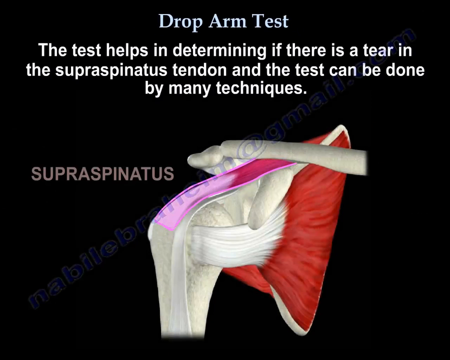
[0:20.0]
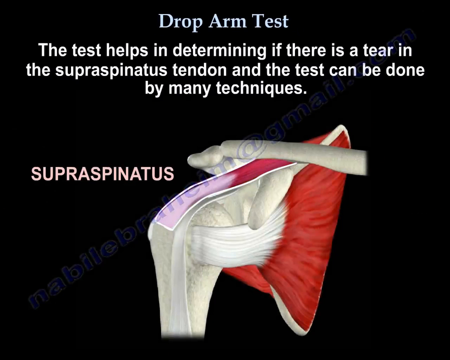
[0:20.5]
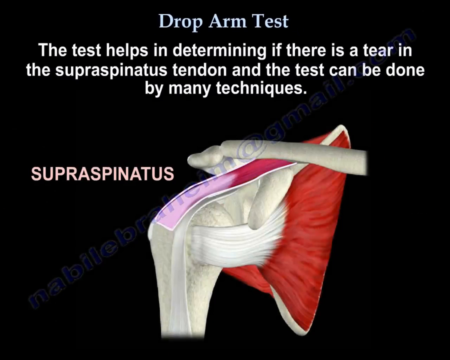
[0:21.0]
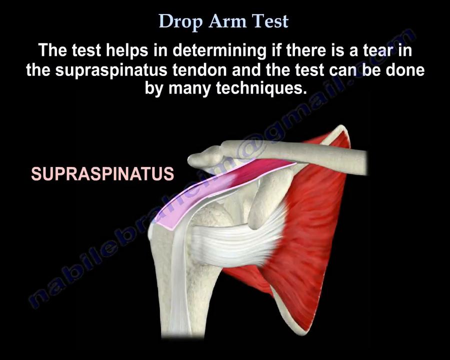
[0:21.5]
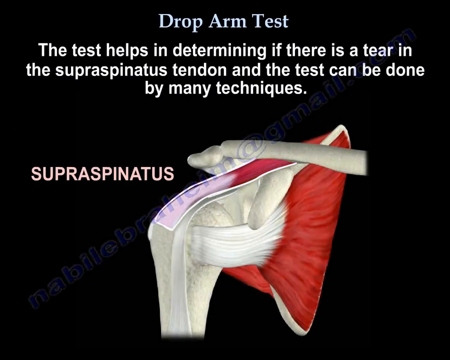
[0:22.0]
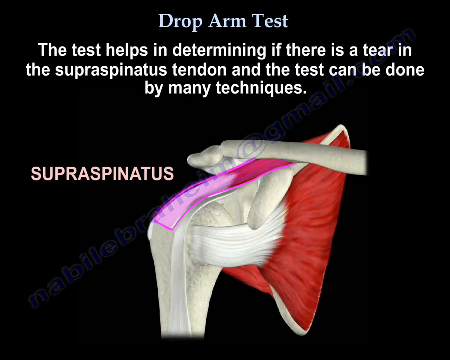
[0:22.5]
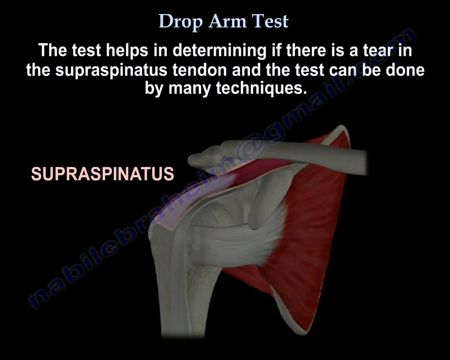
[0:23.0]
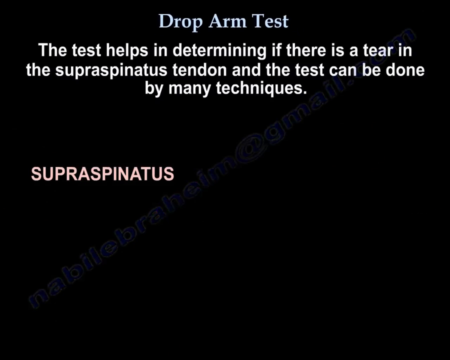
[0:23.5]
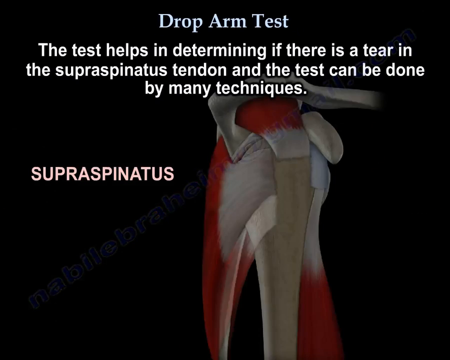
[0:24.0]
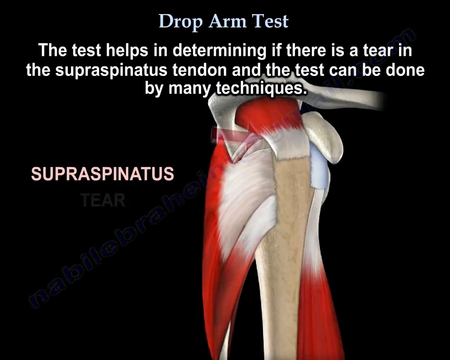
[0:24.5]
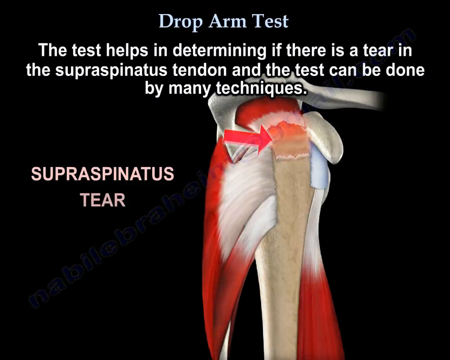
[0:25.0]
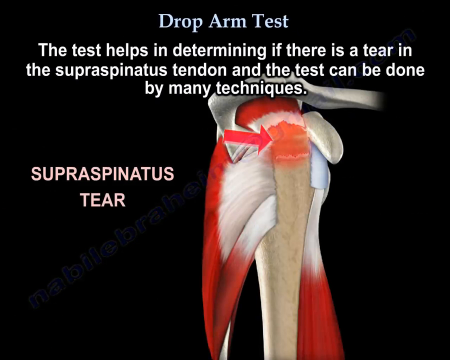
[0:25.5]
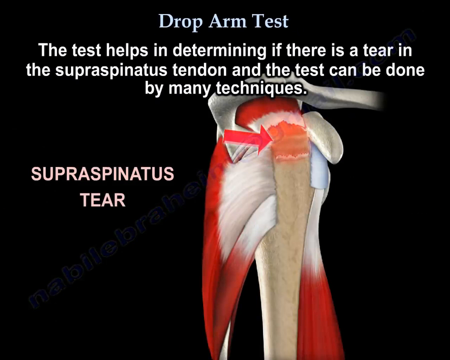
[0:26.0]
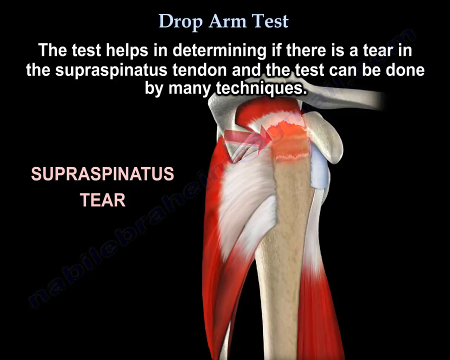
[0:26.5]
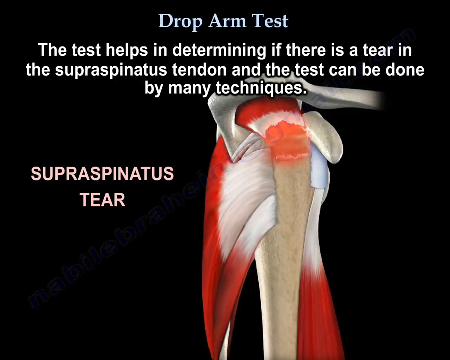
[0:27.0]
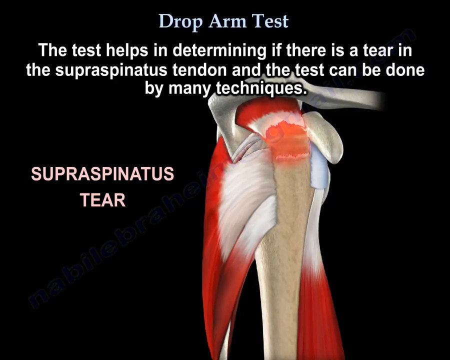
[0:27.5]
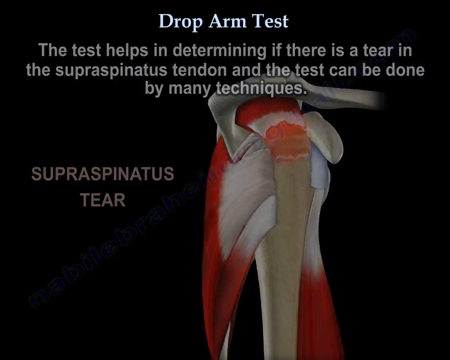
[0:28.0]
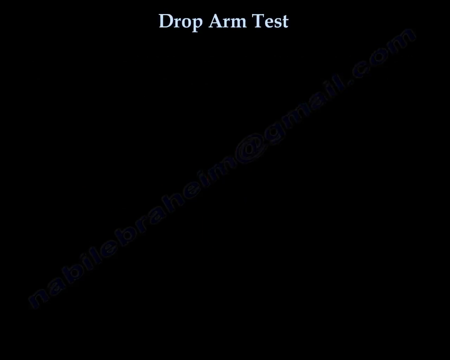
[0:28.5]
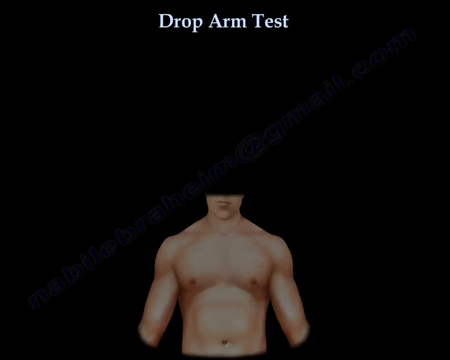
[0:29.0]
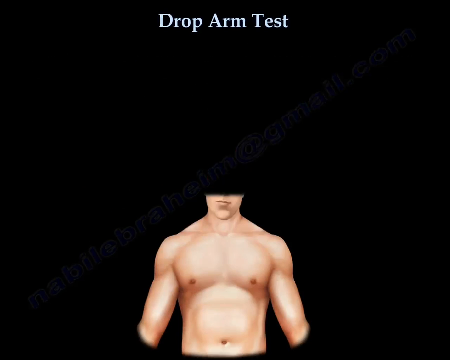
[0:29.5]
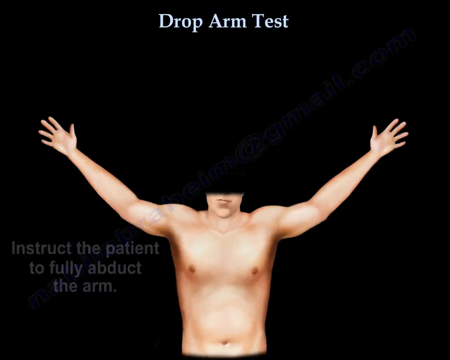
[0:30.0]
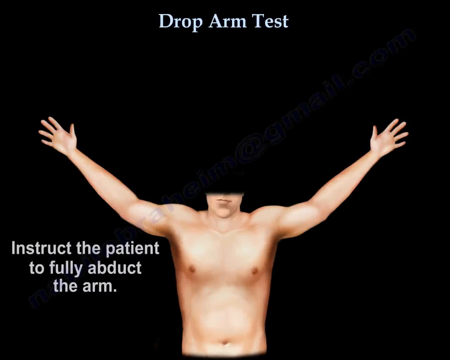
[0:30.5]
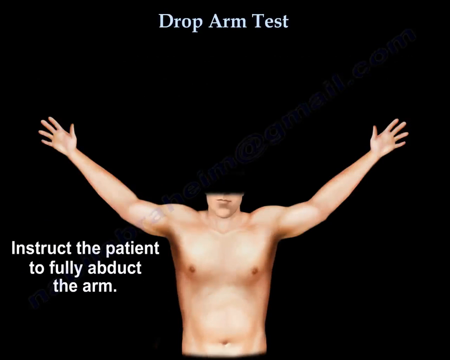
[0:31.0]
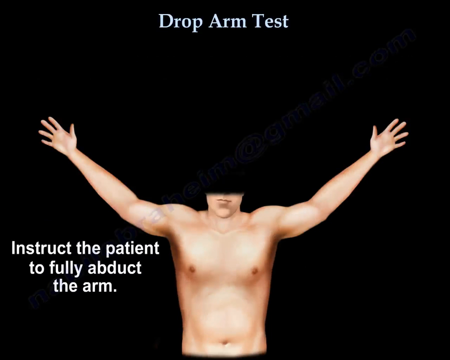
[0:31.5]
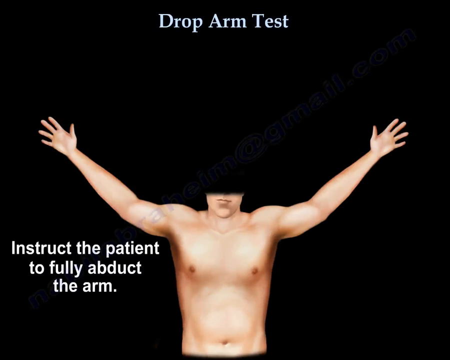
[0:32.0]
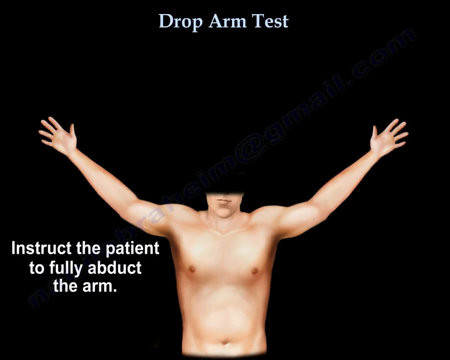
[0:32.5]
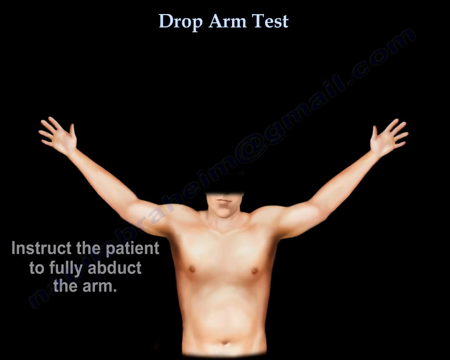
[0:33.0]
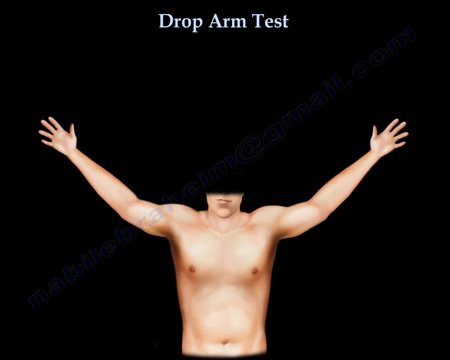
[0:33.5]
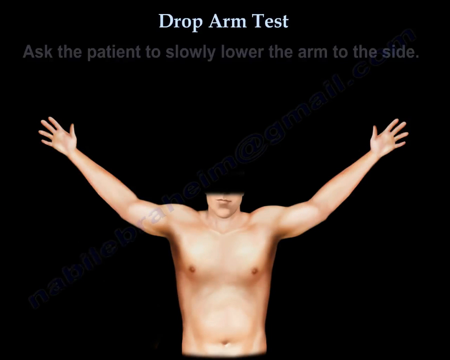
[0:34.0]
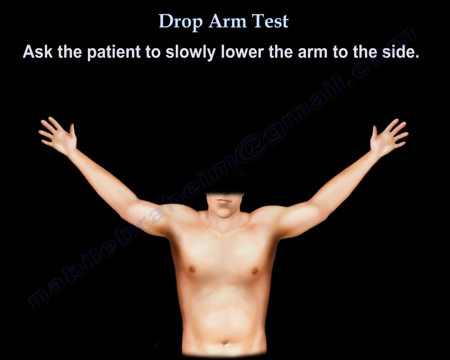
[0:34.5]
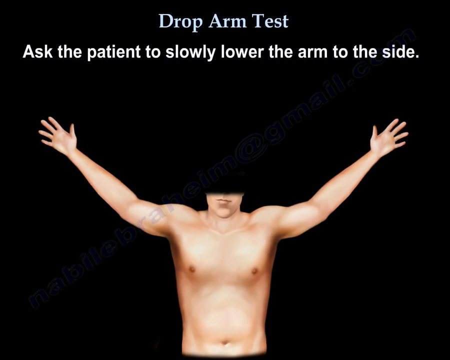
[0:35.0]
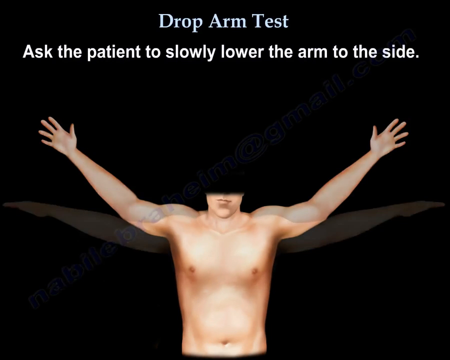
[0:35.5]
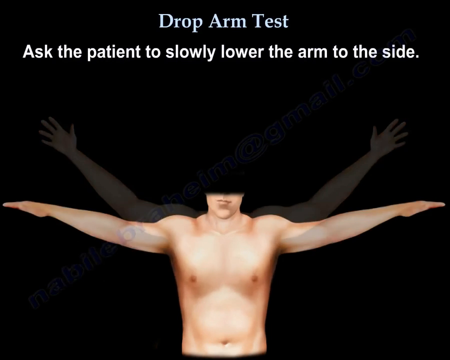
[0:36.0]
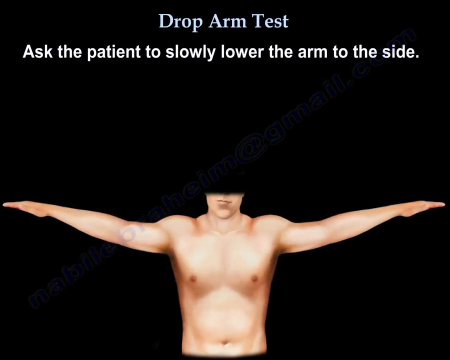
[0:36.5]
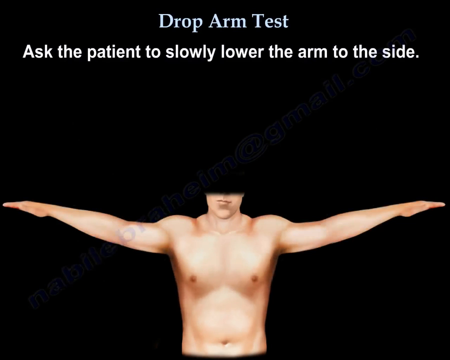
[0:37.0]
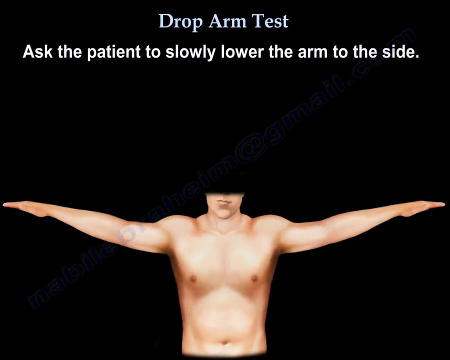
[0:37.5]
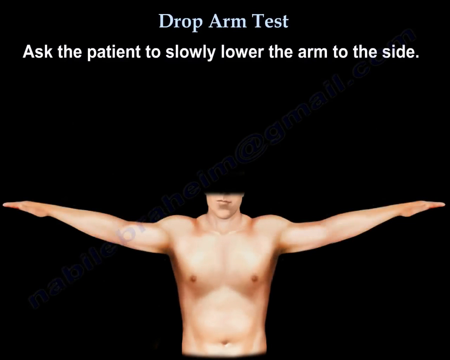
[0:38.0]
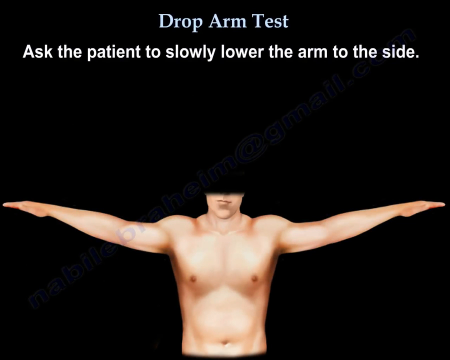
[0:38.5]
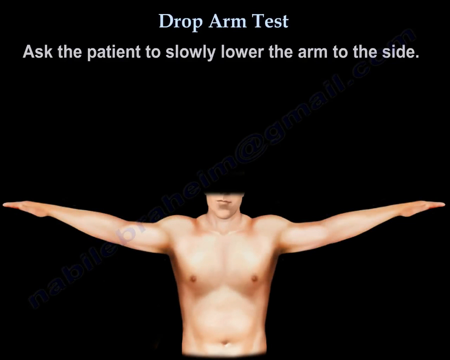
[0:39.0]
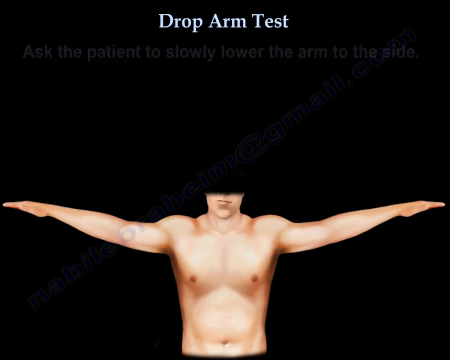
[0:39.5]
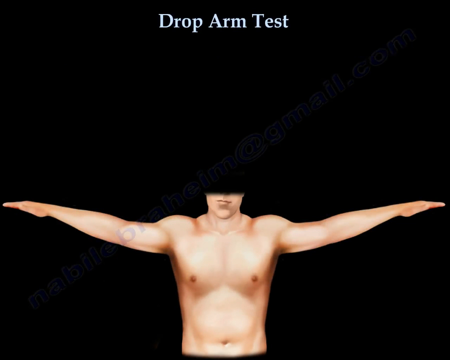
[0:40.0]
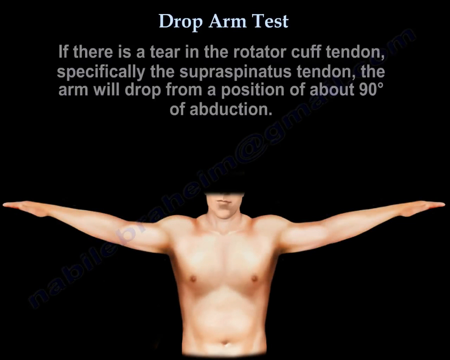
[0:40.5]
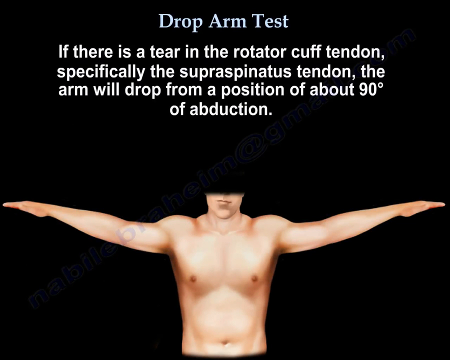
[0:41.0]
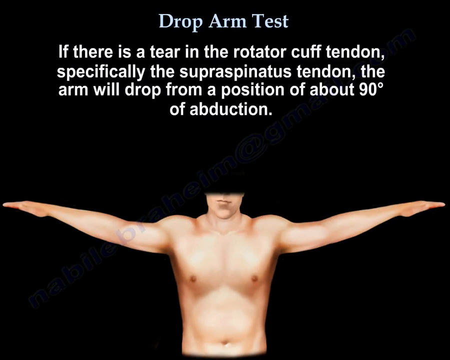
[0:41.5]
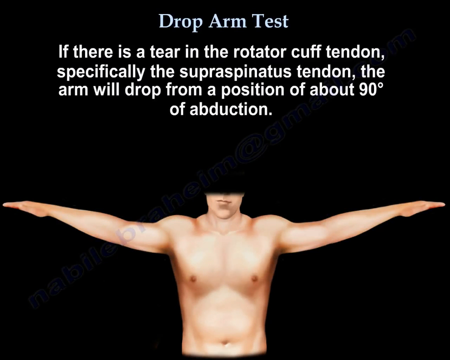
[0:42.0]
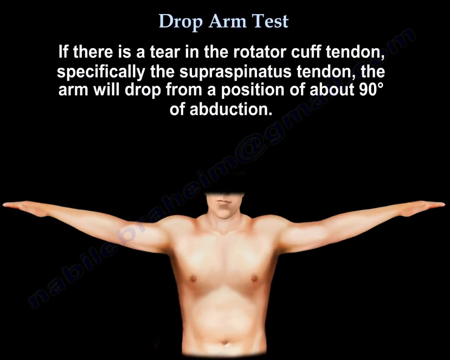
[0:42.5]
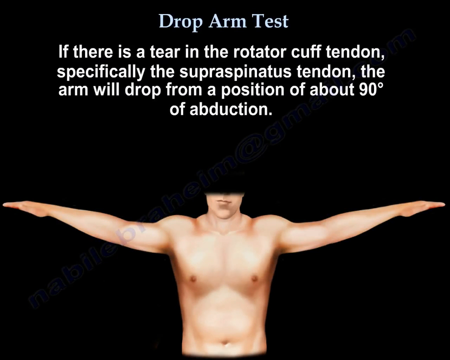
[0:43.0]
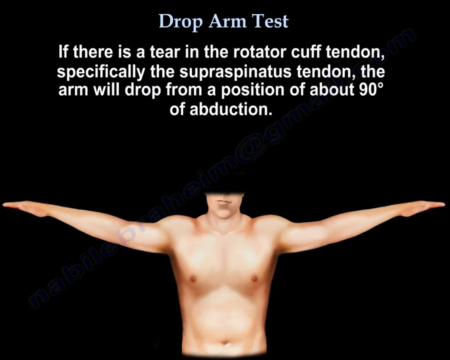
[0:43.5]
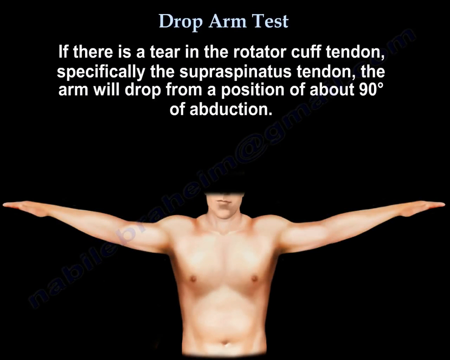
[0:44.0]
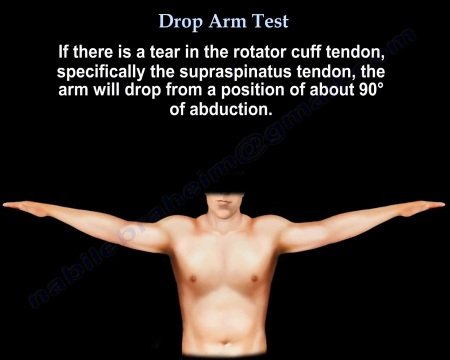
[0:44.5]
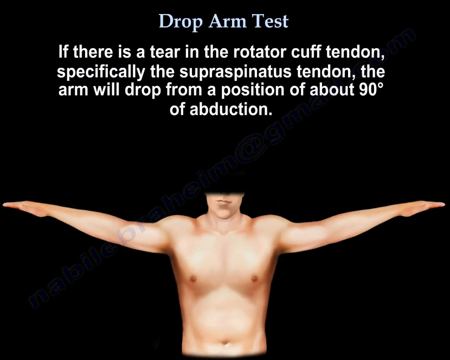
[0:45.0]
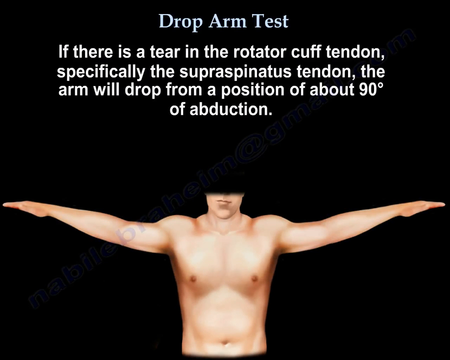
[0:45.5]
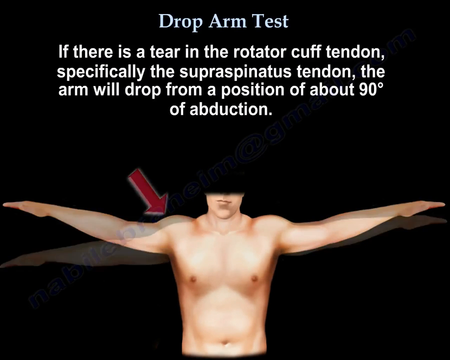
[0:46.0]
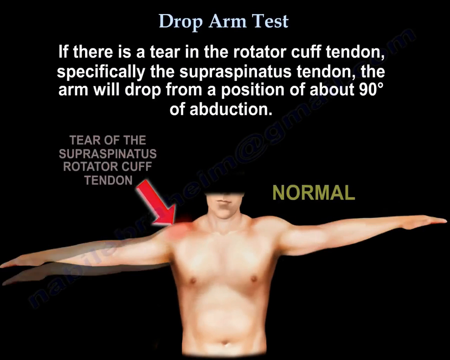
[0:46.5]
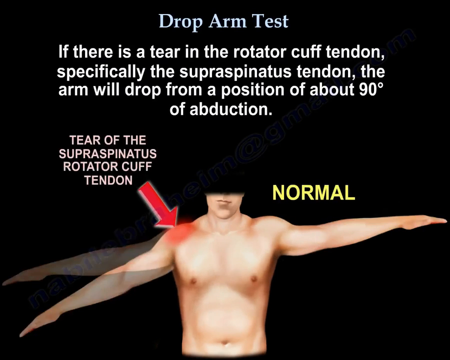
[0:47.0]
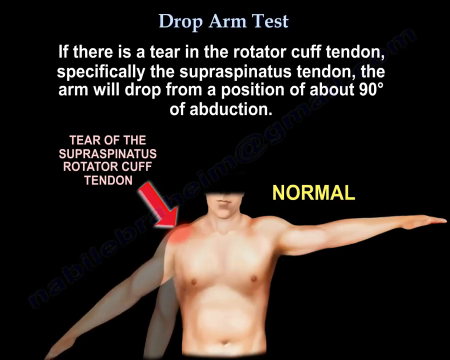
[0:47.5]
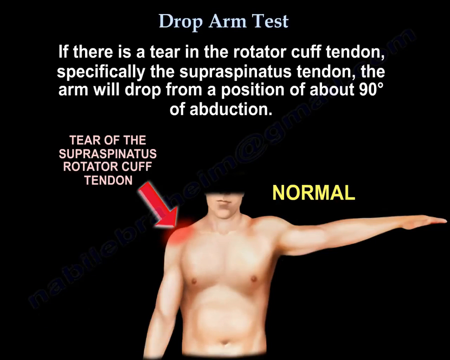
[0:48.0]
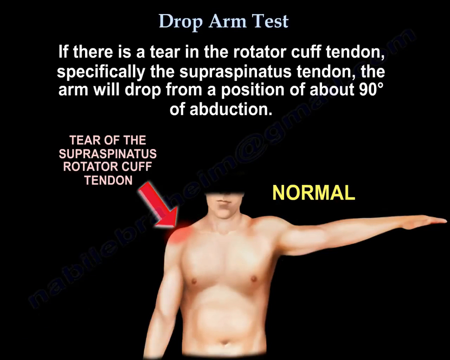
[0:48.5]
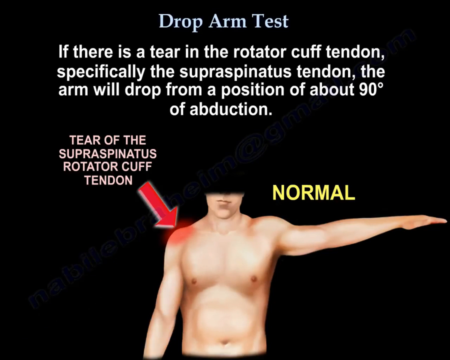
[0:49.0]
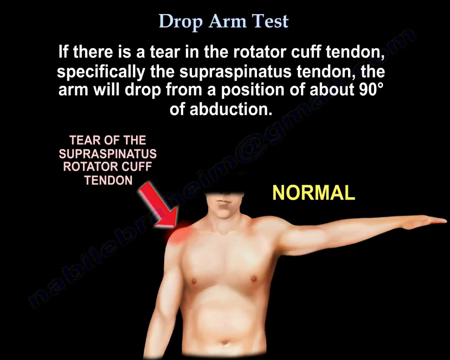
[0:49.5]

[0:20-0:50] The drop arm test continues with an animation of the tendon and muscle of the right arm, the supraspinatus. An arrow points roughly to where the tear is, and red animation flashes there. The animation of the white man returns, with text about instructing the patient to fully adduct the arm. The patient is asked to lower the arm to the side, almost like an airplane. Text states that if the tear is in the rotator cuff tendon, specifically that tendon, the arm will drop from a position of about 90 degrees of abduction. The background is all black. The man lowers his right arm, and an arrow points to the top of the shoulder on that side, the viewer's left, showing the inflamed, torn tendon.